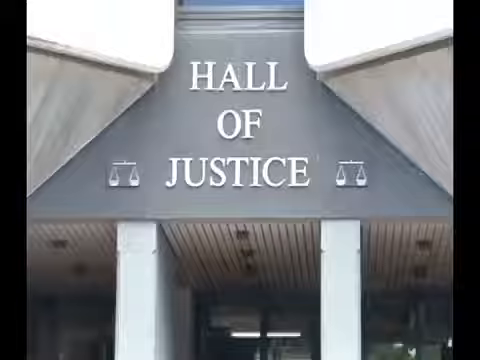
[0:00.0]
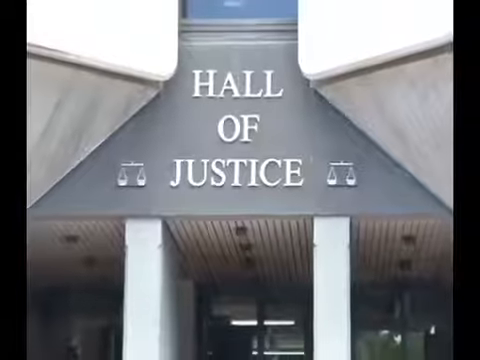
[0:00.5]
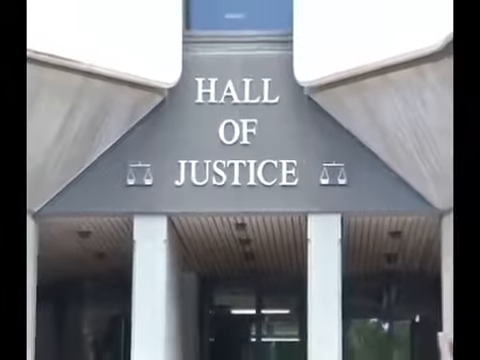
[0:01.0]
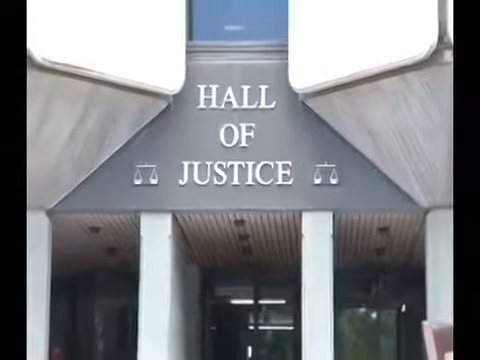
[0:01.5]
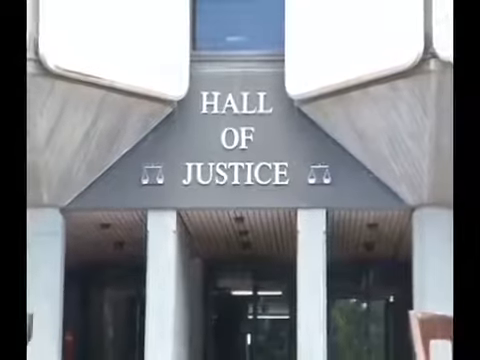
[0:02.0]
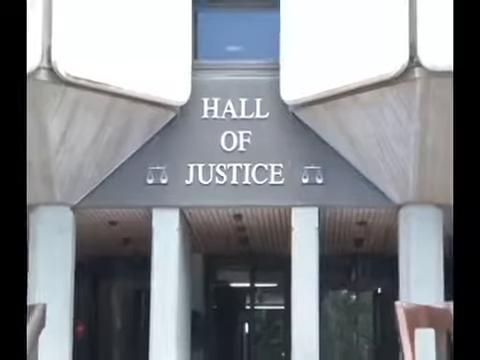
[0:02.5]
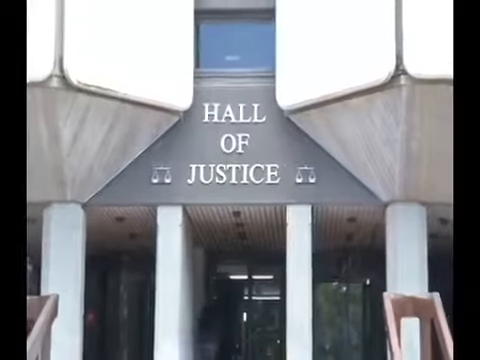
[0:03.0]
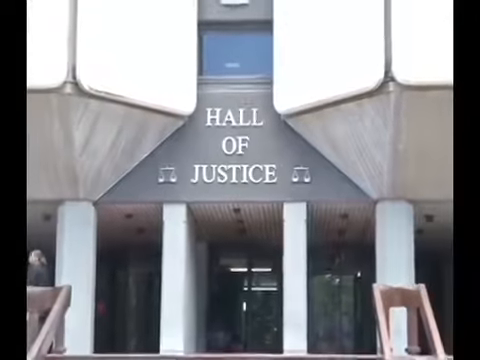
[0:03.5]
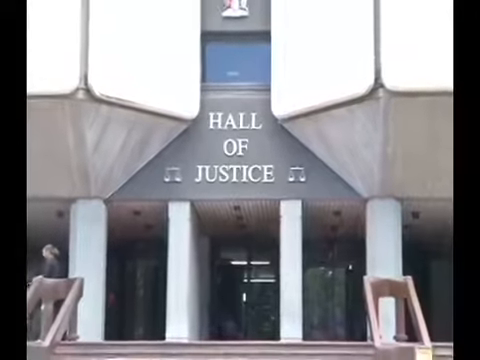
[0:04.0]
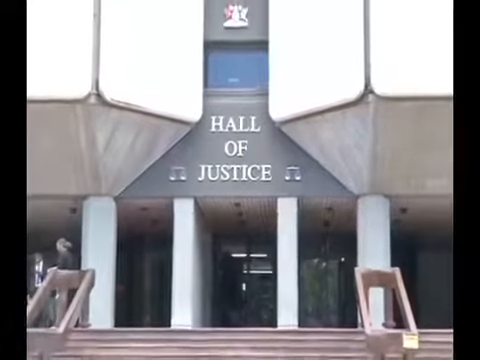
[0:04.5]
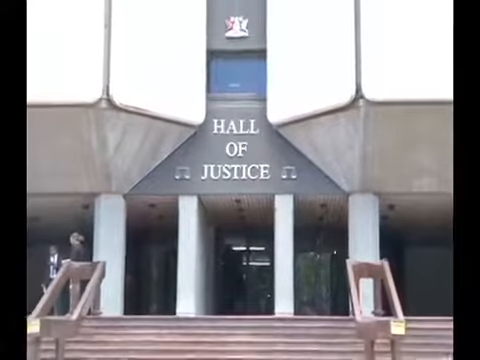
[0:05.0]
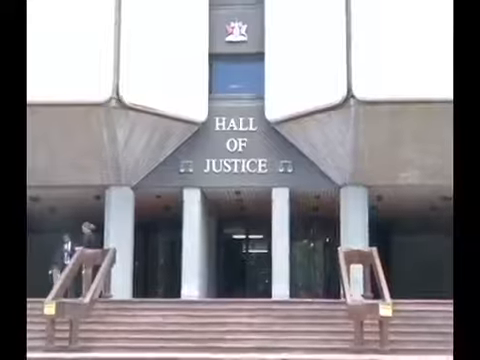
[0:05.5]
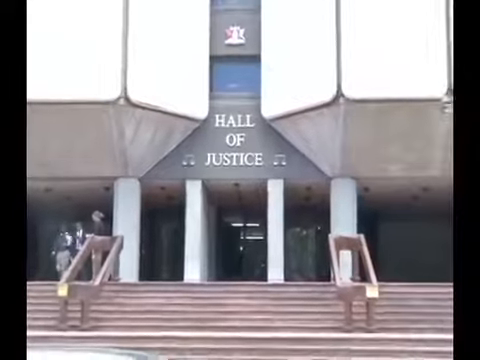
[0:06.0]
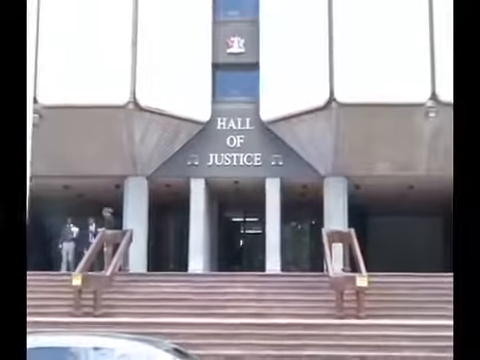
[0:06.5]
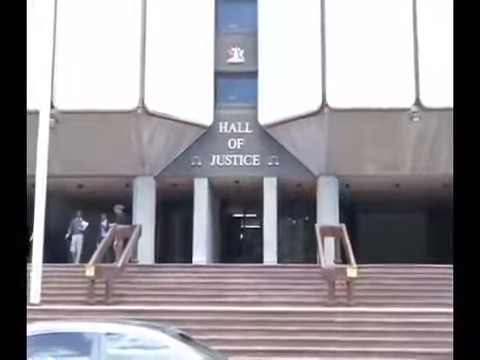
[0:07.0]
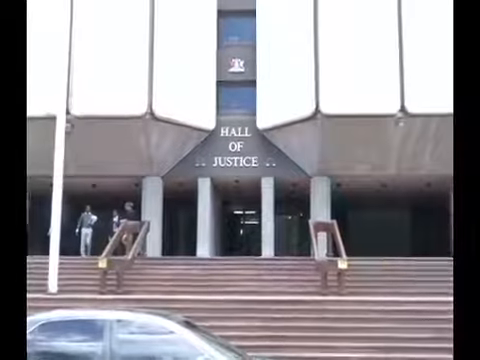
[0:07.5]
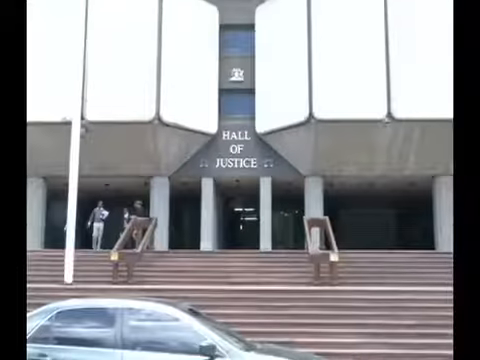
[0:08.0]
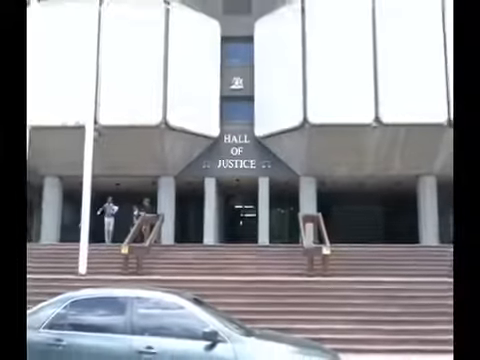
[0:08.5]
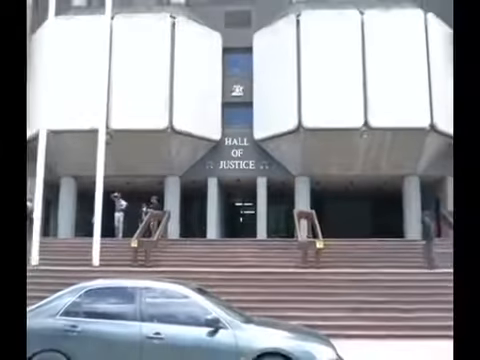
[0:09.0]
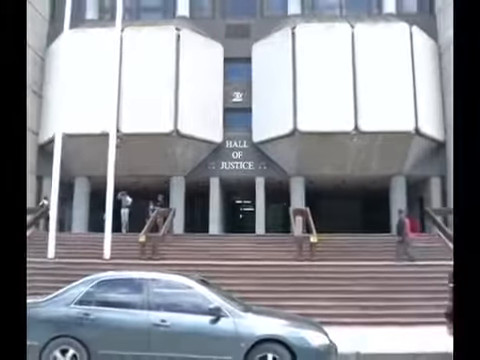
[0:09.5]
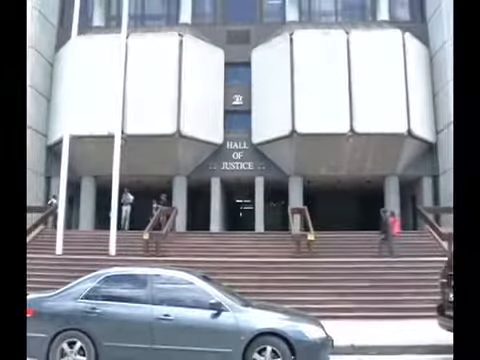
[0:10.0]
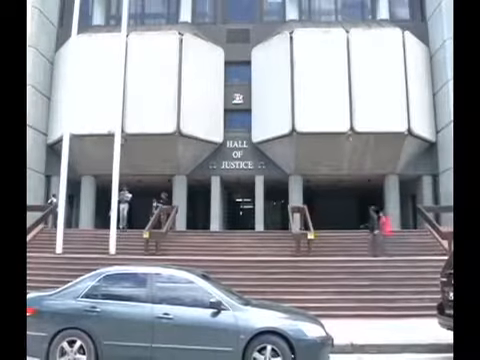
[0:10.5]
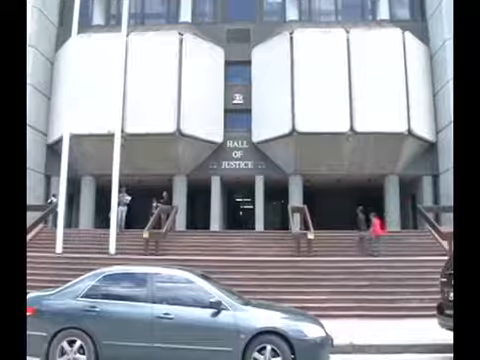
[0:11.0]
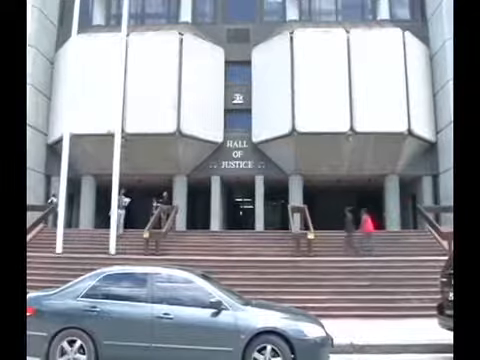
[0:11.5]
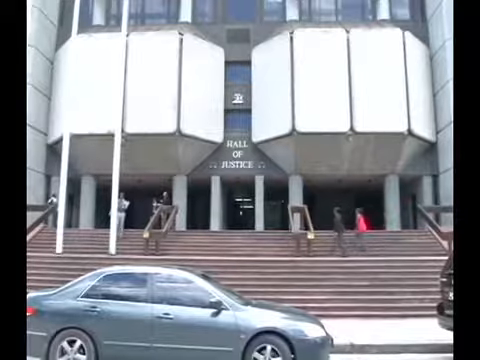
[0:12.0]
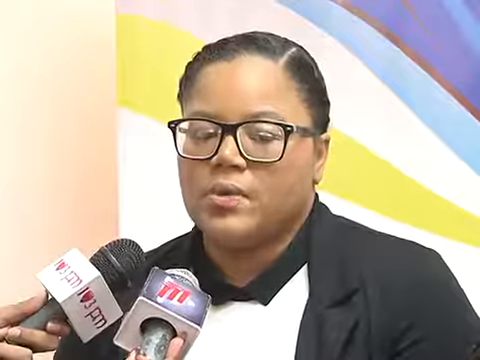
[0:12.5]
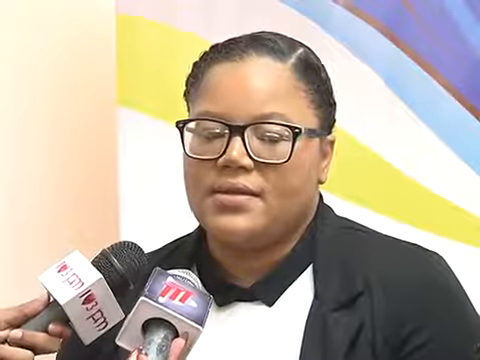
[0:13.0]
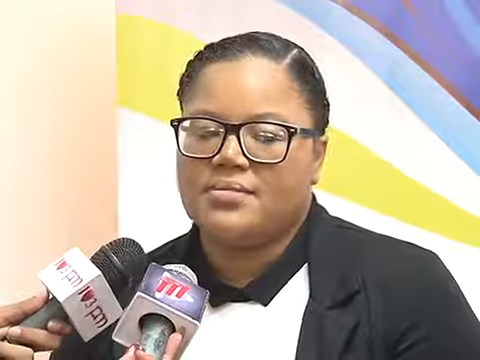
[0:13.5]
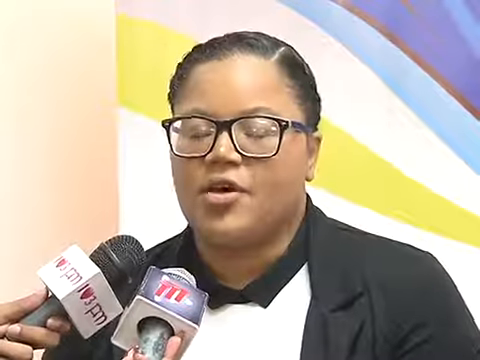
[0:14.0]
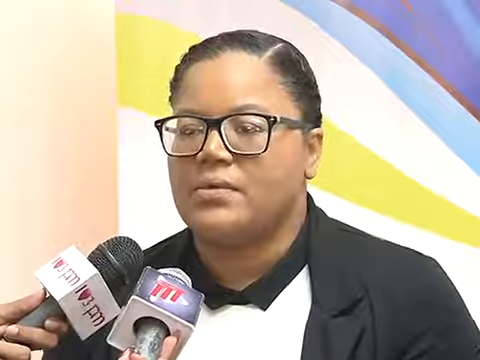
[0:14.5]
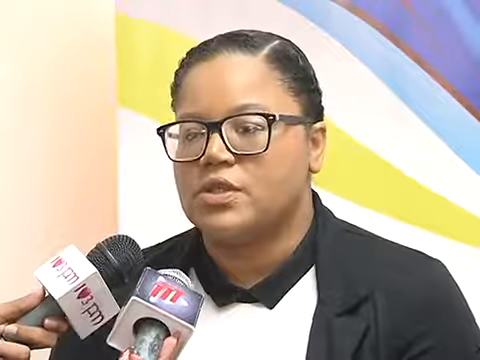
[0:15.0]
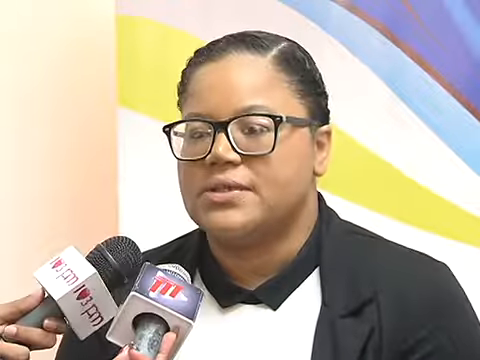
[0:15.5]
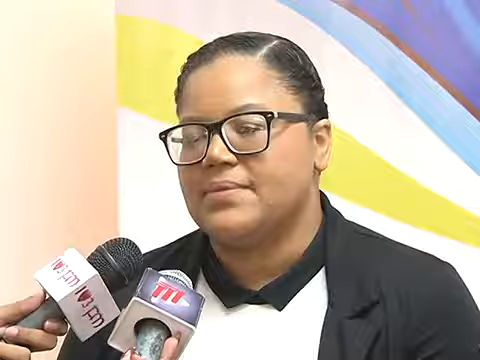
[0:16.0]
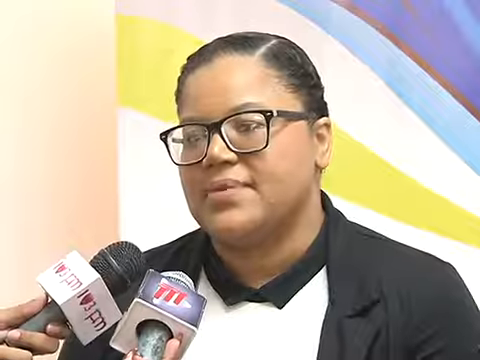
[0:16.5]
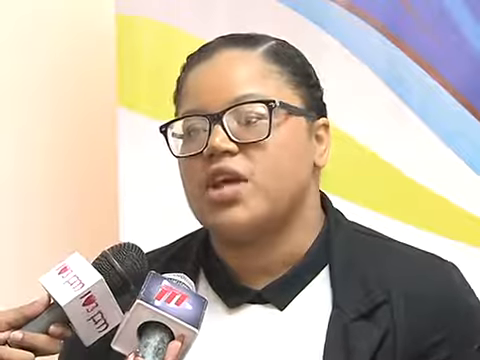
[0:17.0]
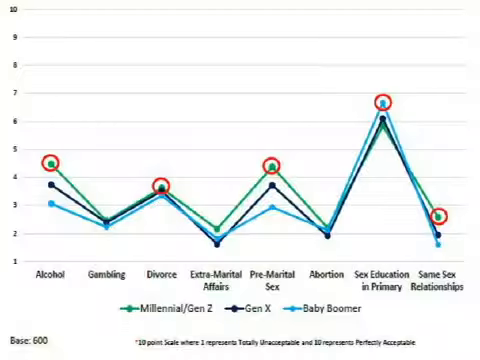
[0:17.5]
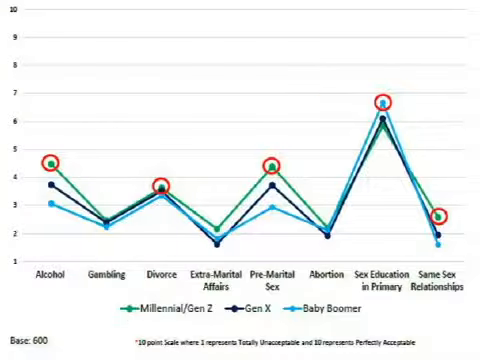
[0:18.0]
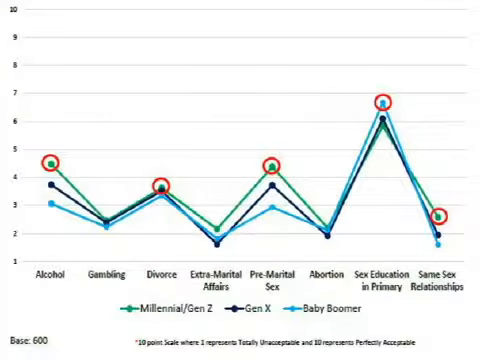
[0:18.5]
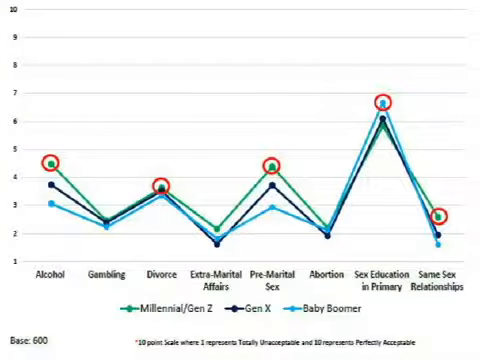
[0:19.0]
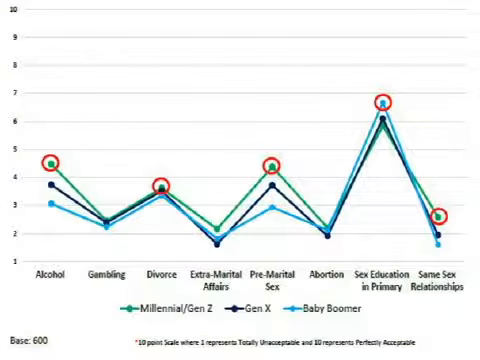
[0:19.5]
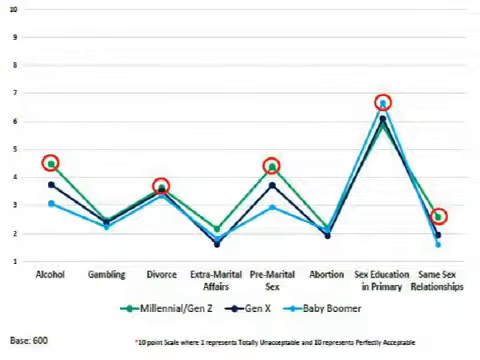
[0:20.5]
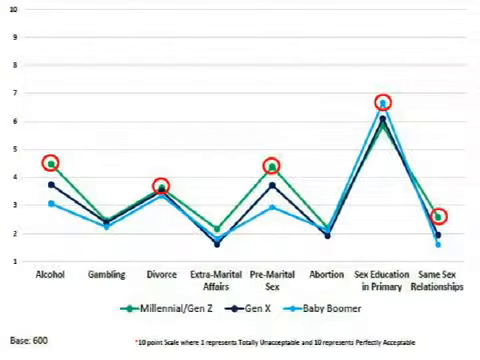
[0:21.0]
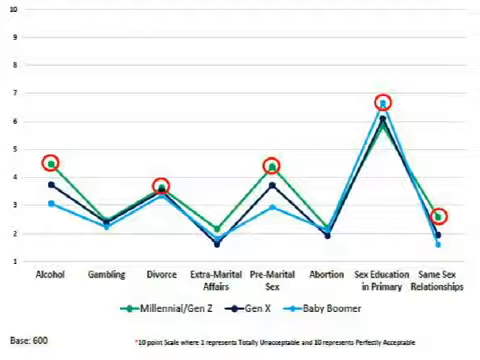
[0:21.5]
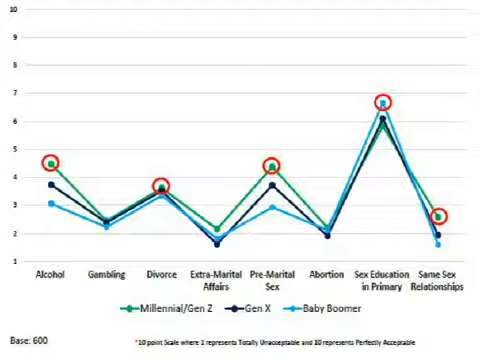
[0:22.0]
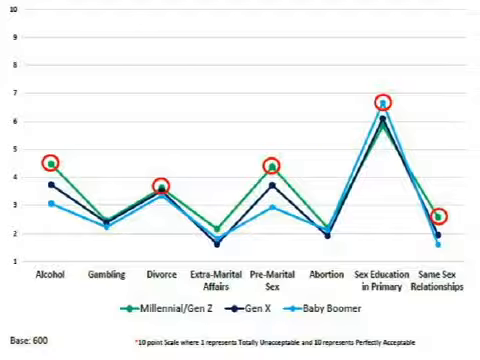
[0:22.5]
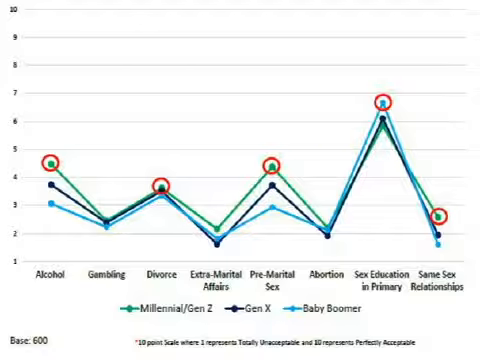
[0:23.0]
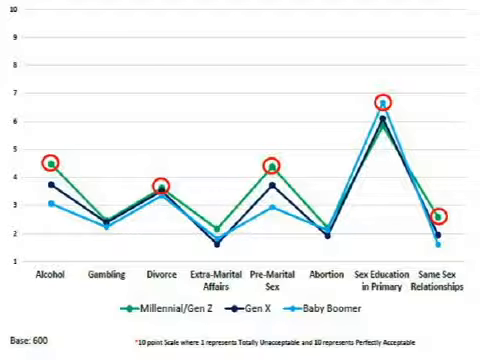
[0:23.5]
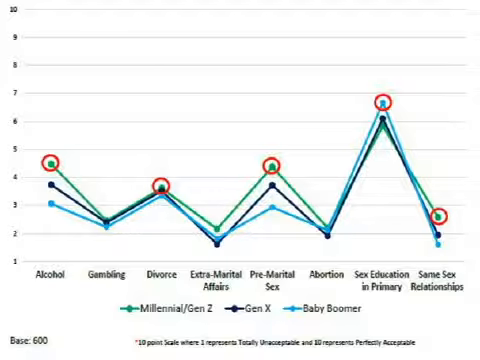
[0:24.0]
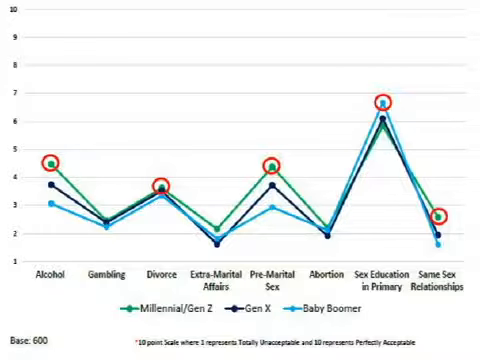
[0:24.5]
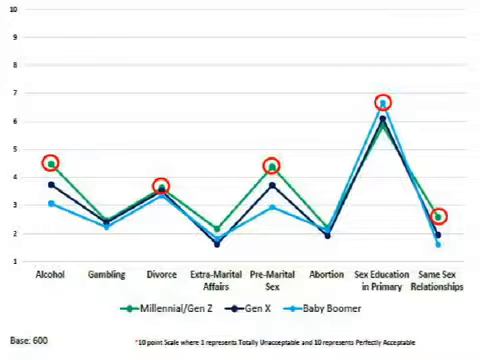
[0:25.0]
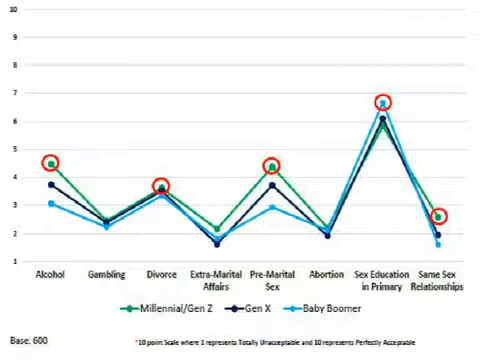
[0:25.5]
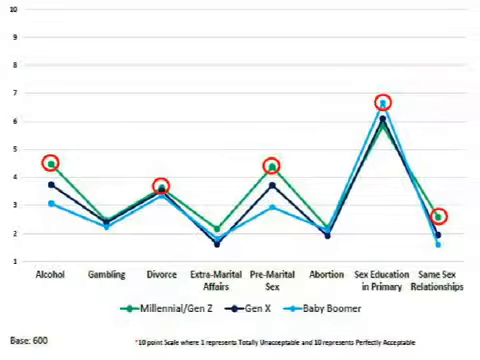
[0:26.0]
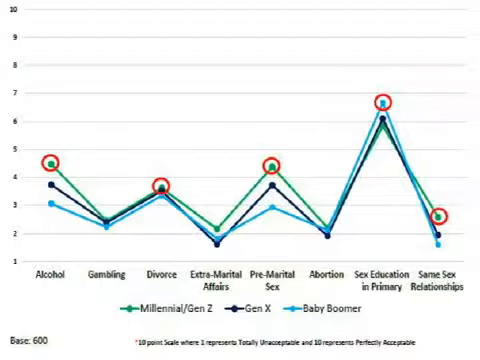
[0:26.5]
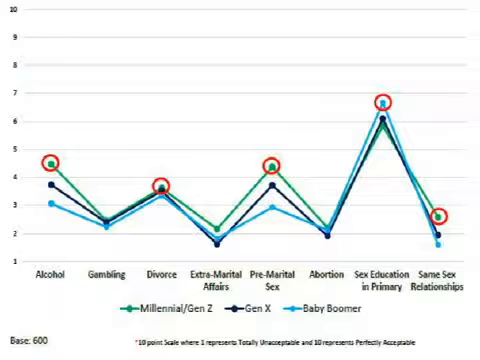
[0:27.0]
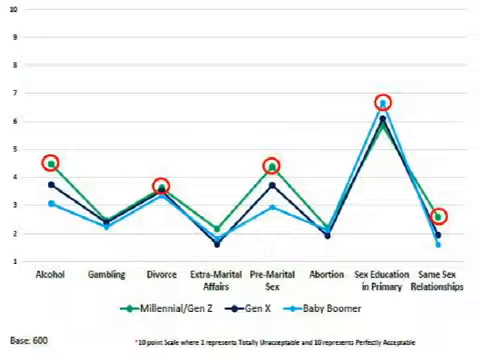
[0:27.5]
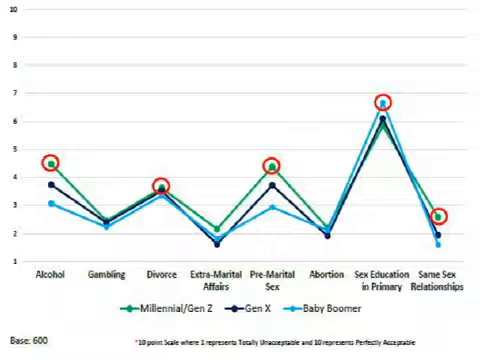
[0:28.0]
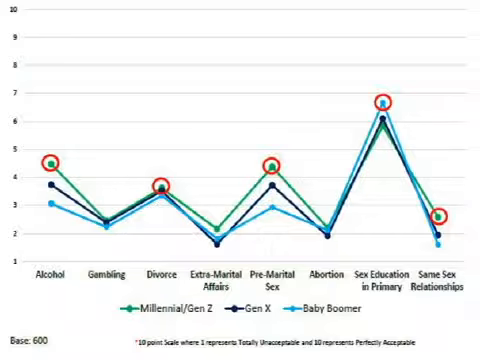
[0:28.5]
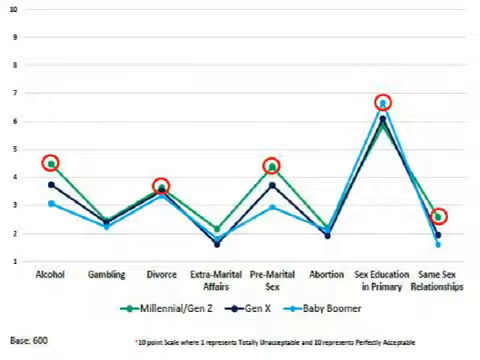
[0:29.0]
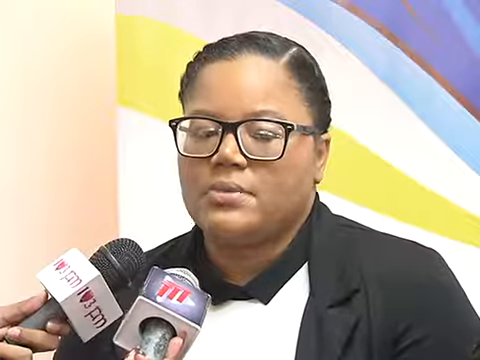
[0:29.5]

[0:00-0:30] The outside of a building called the Hall of Justice is shown, with a pair of scales on either side of the hall's name. Four pillar walls stand at the front of the building, and steps with rails lead up to it. Two people stand talking outside while a man leaves the building and walks down the steps. A road runs in front of the building with a car parked on it, and two people walk along in front of the building, which is several storeys high. Next, a woman wearing a pair of glasses talks into two microphones held by people who cannot be seen. A graph follows, comparing age groups: Millennial/Gen Z shown by a green line, Gen X by a black line, and Baby Boomer by a blue line. Categories along the bottom include alcohol, gambling, divorce, extramarital affairs, premarital sex, abortion, sex education and same-sex relationships. Millennial/Gen Z peaks for alcohol, divorce, premarital sex and same-sex relationships, but is lowest for sex education in primary school. Baby Boomers peak for sex education in primary school, do not have the highest figures for extramarital affairs or abortion, and have the lowest for premarital sex. The Gen X figures seem to fall between those of Millennial/Gen Z and Baby Boomers.